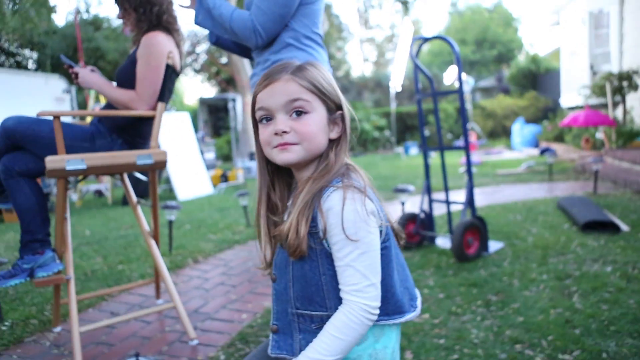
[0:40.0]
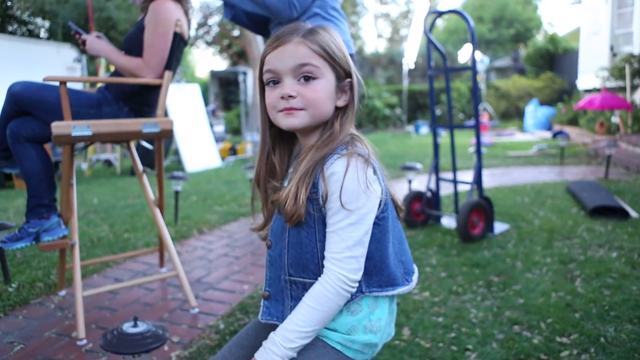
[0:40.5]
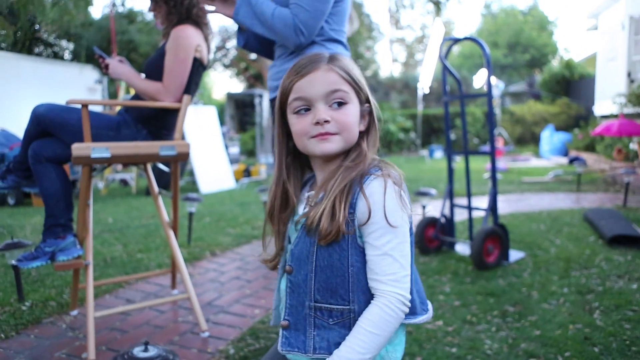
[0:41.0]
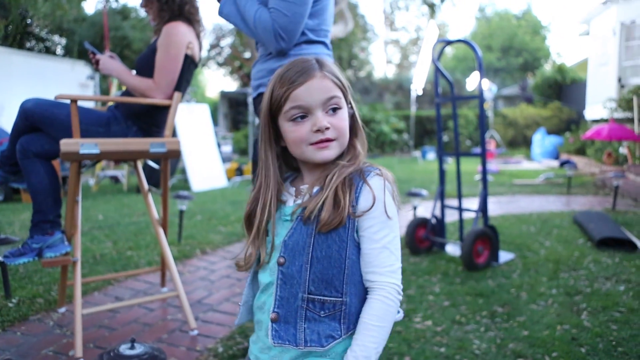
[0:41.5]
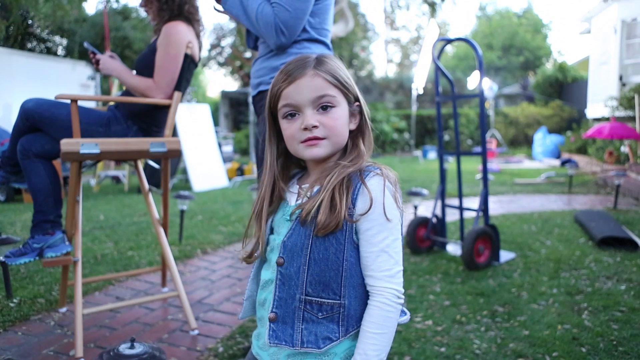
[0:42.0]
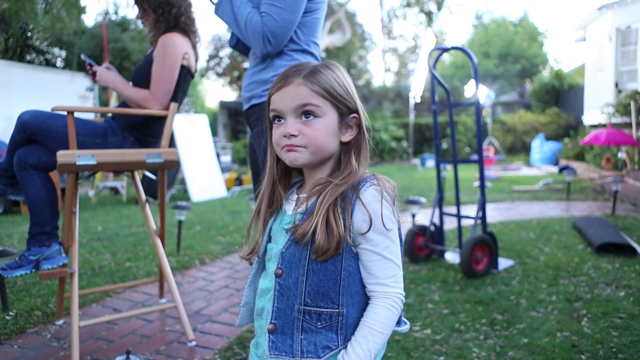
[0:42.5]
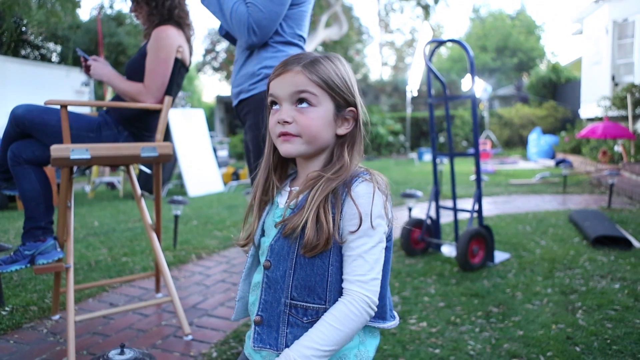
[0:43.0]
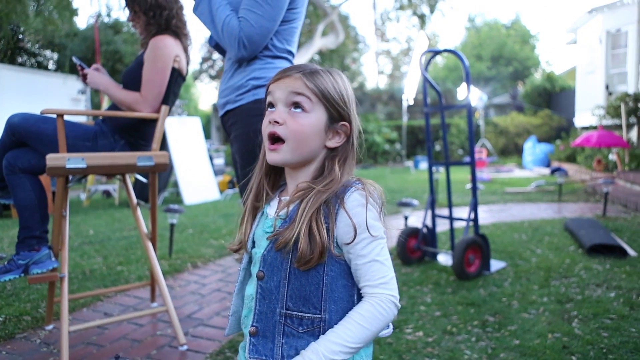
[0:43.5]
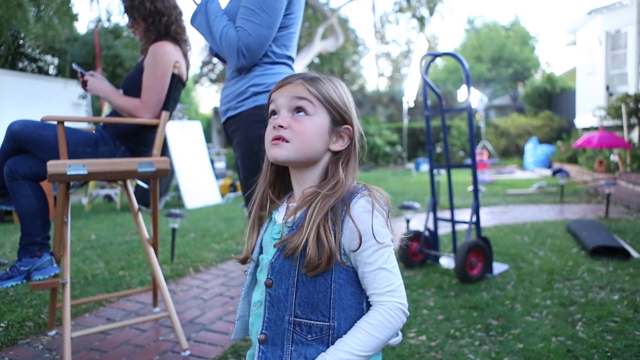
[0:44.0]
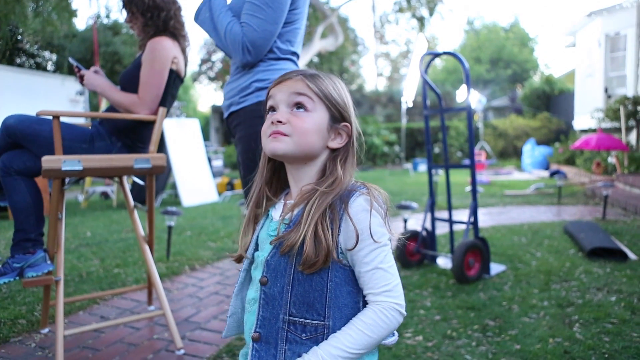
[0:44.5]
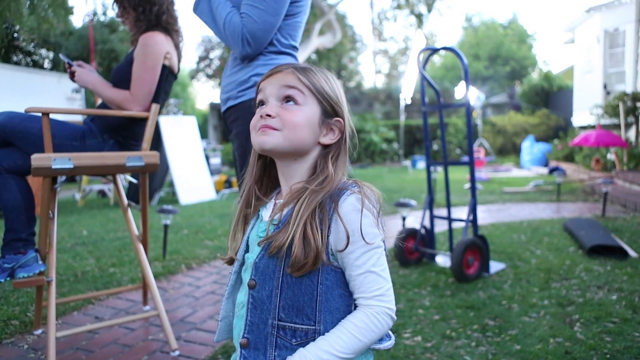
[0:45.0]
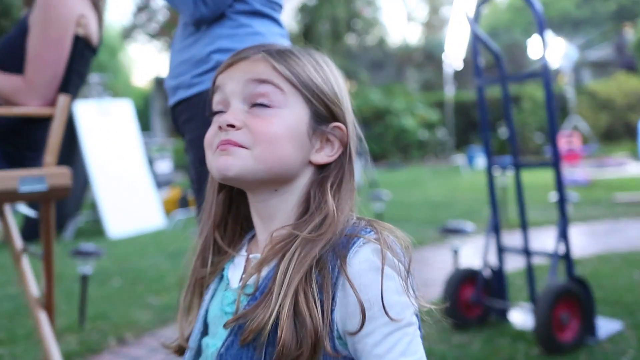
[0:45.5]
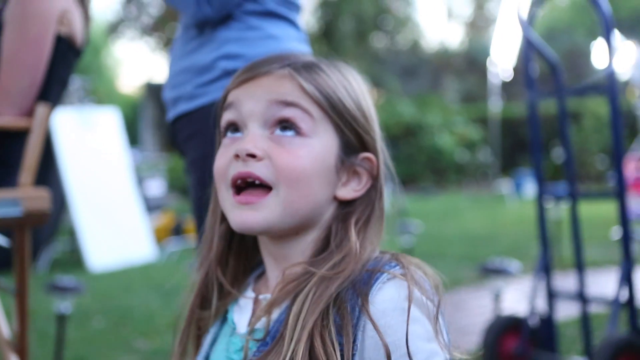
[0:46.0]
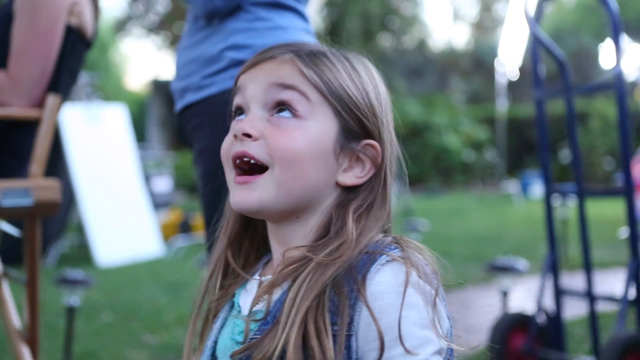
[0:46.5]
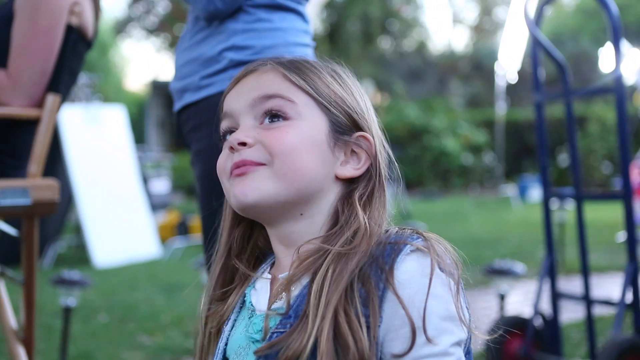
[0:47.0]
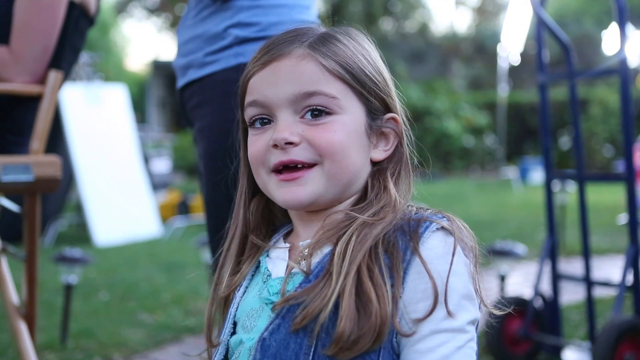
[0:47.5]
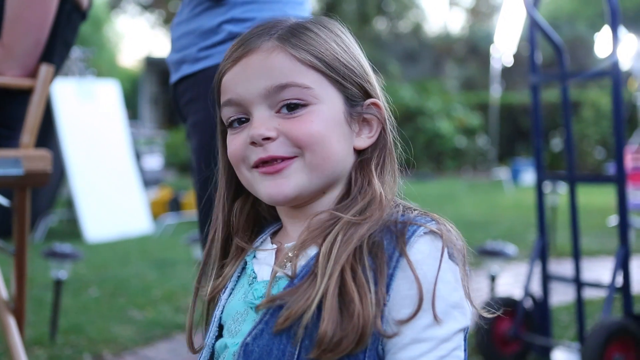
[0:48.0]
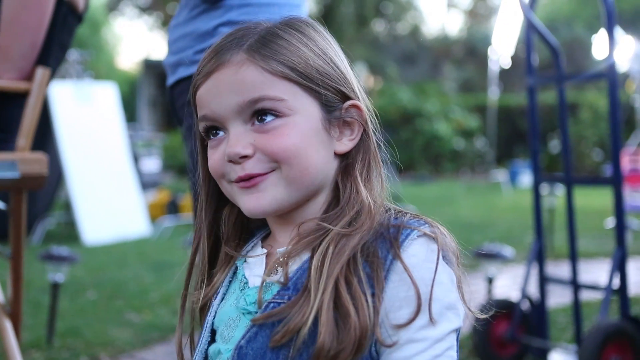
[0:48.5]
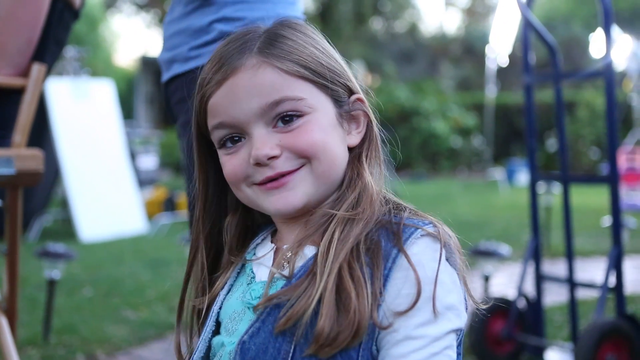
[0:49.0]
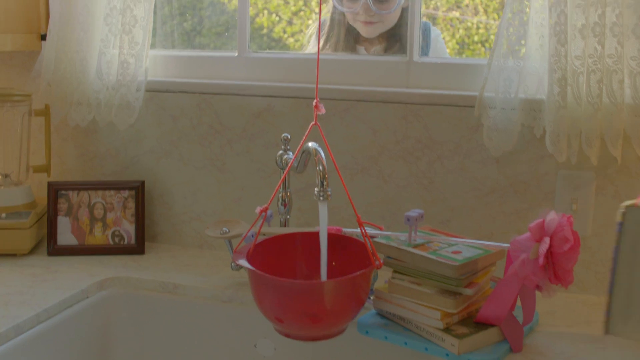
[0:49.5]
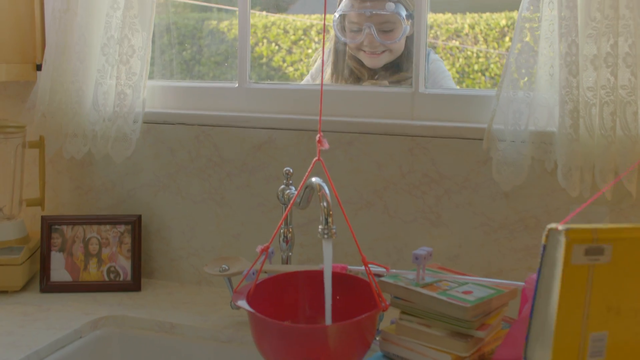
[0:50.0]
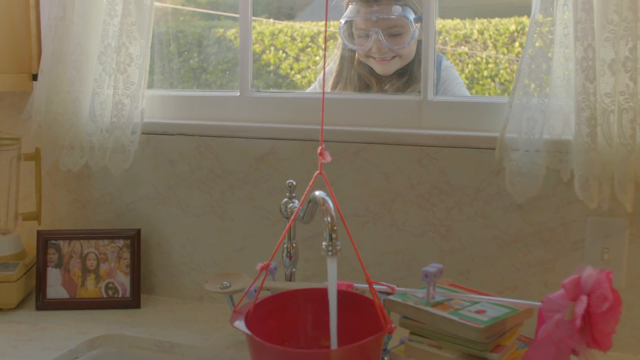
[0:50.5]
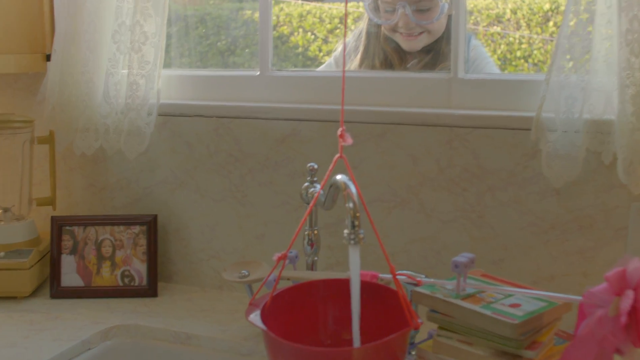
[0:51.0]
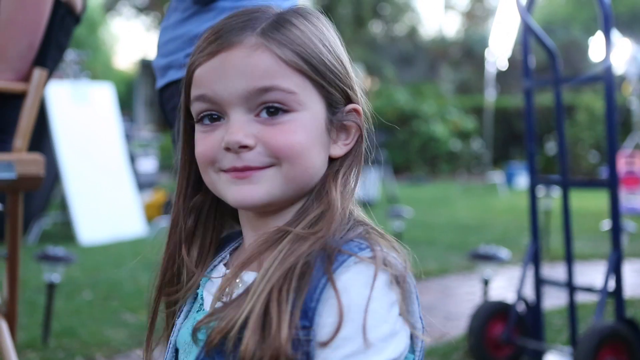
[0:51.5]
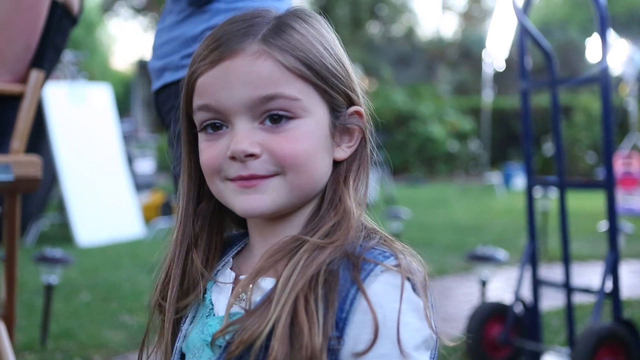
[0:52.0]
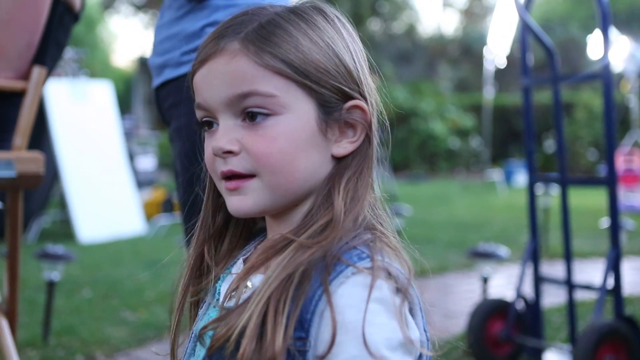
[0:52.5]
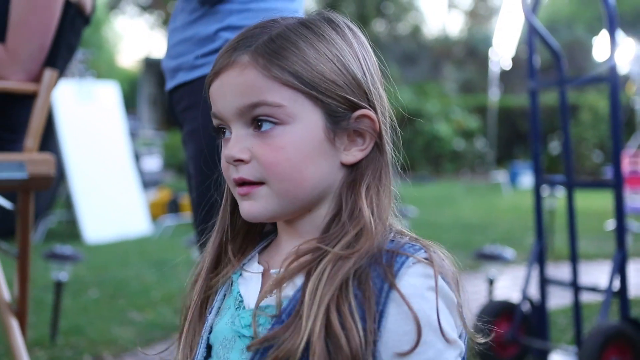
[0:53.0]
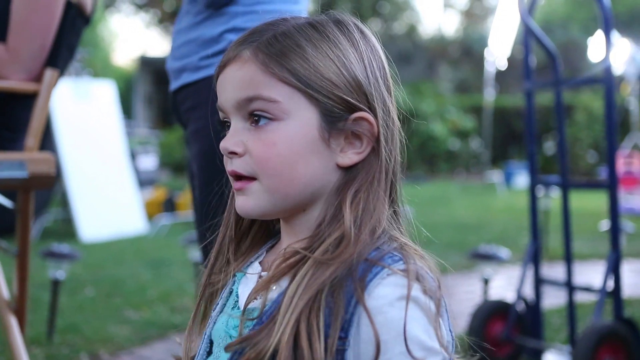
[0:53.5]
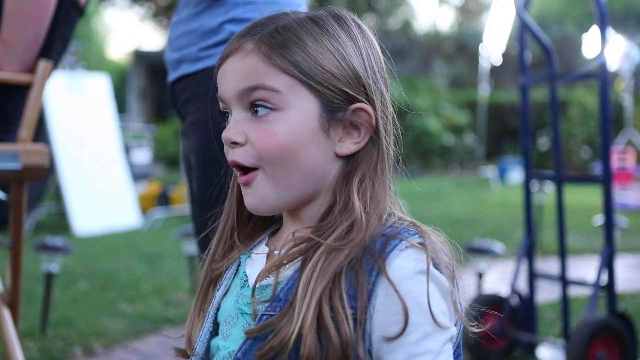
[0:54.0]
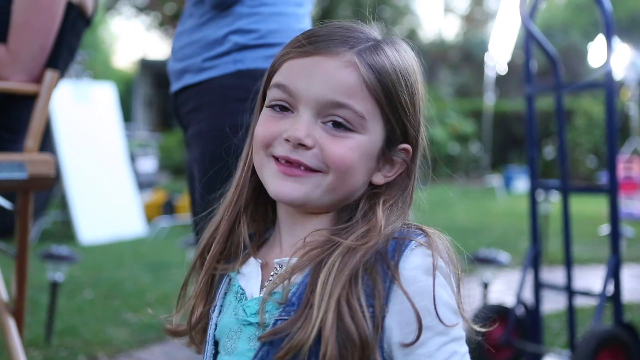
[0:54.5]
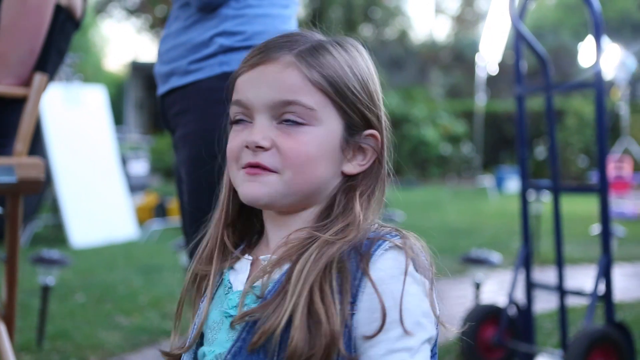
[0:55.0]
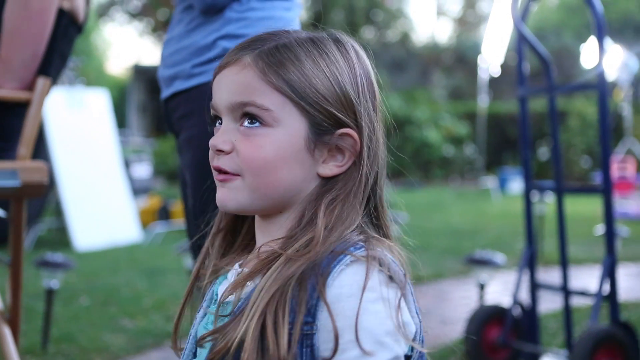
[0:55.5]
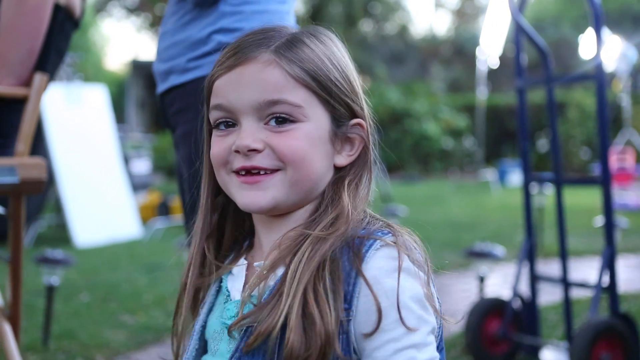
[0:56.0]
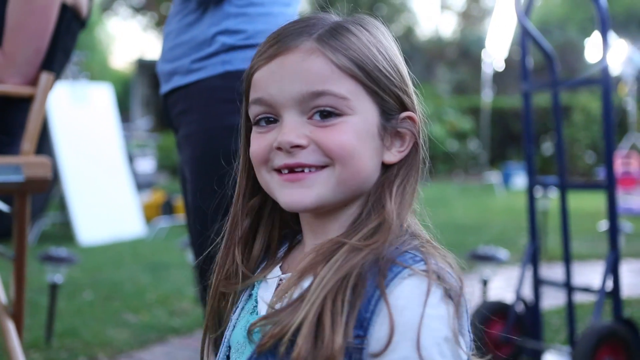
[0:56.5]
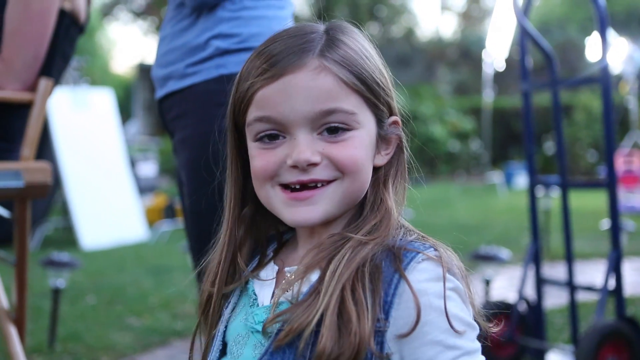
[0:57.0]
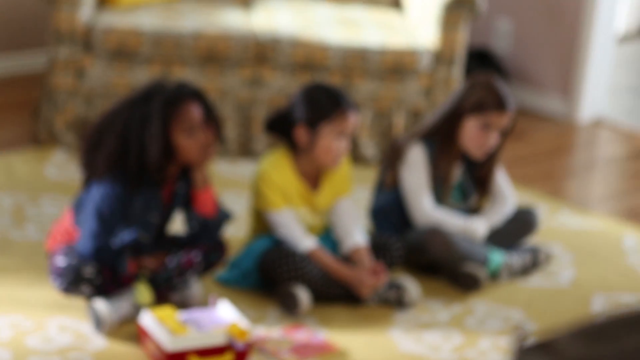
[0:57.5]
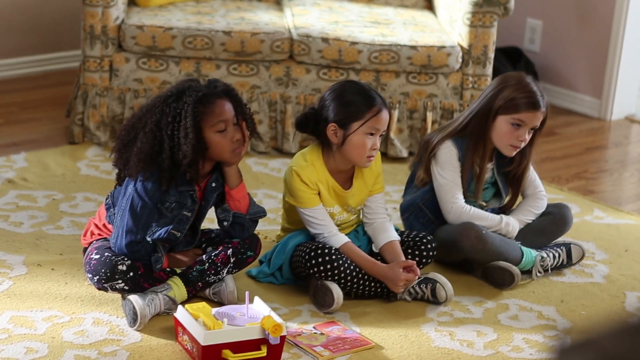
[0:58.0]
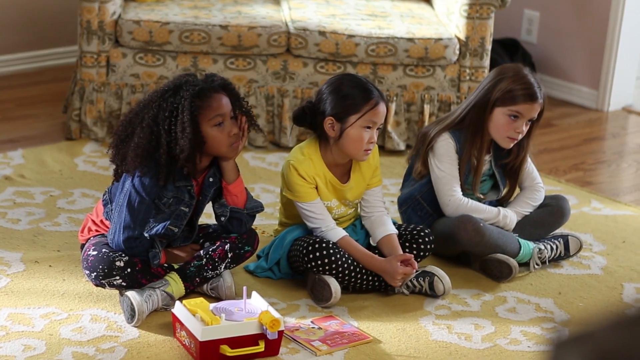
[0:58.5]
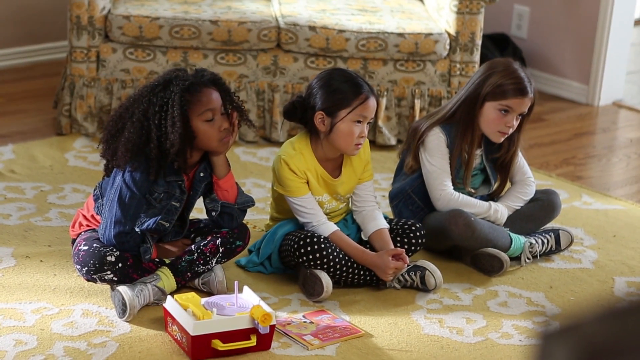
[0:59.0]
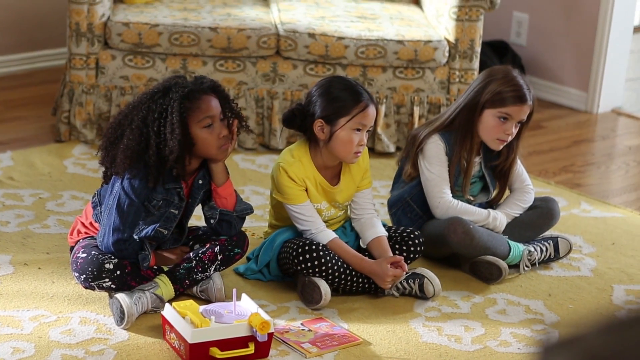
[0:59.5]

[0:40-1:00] The subjects are the six-year-old girl inventor, two adults and three other children. First the inventor talks to the camera. Next, a bucket of water is filled up in the kitchen while the girl looks at it through the window; it appears to be part of her Rube Goldberg-like machine. The video returns to the girl talking to the camera, and then shows three girls sitting cross-legged on the floor of a living room.